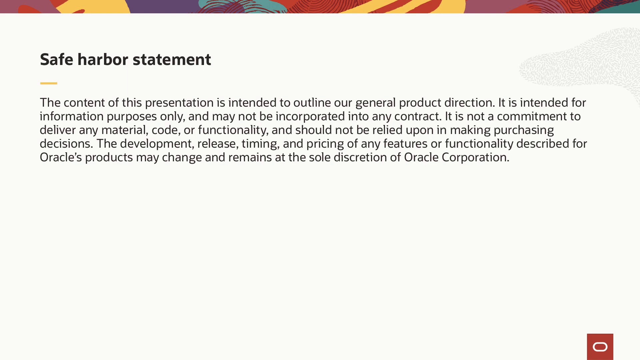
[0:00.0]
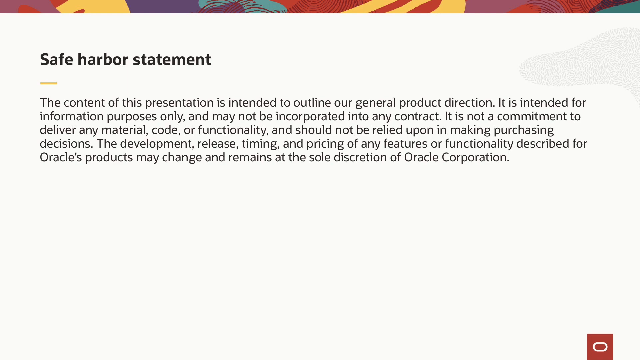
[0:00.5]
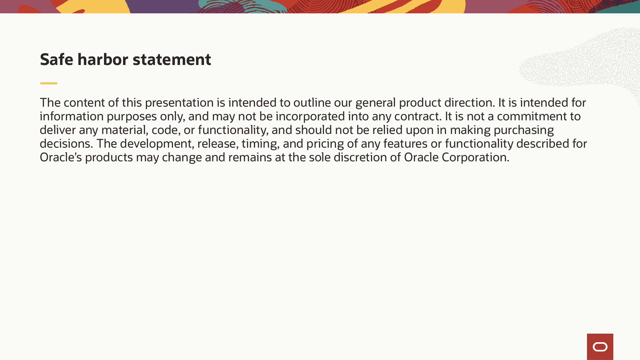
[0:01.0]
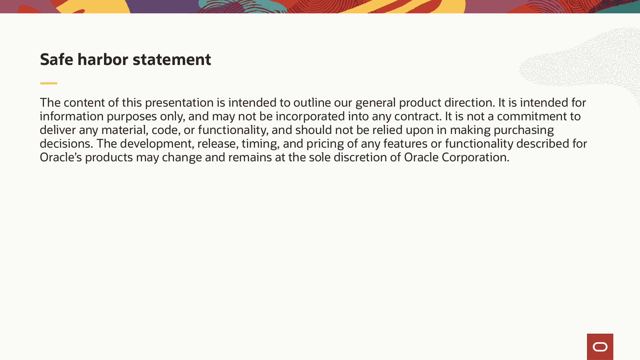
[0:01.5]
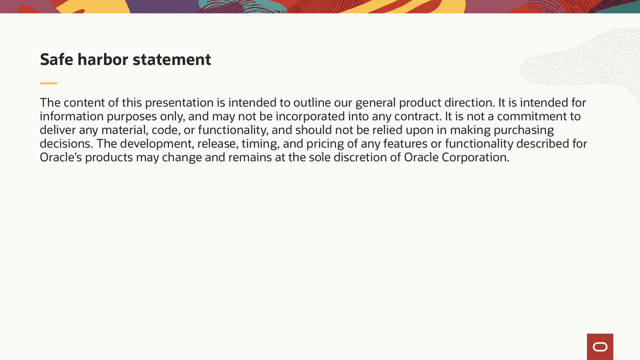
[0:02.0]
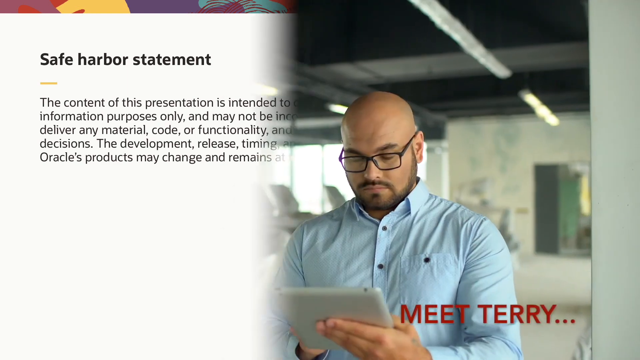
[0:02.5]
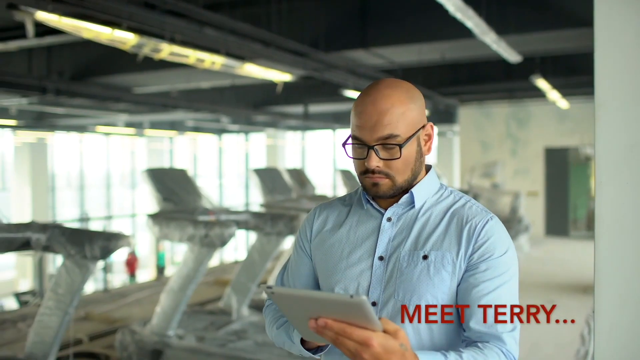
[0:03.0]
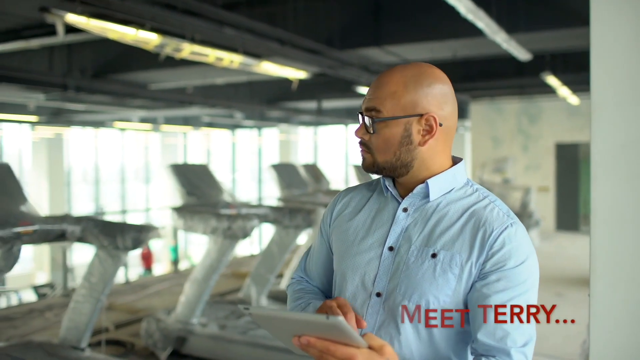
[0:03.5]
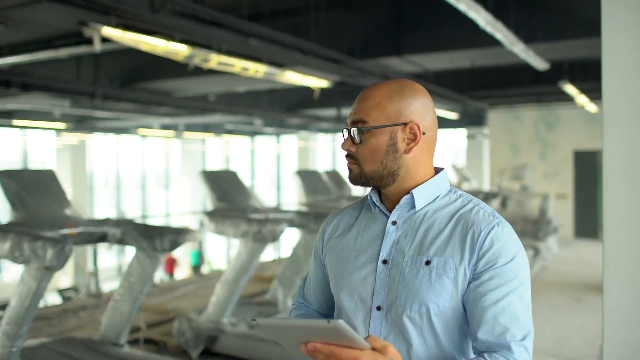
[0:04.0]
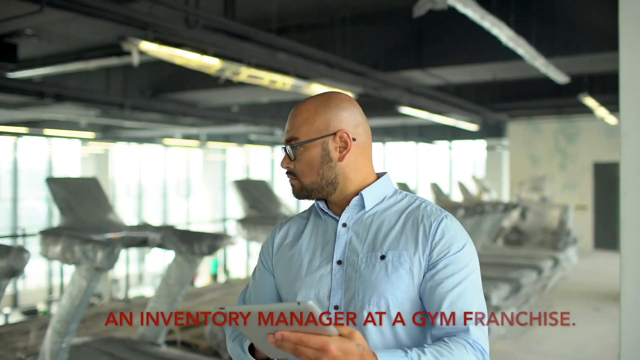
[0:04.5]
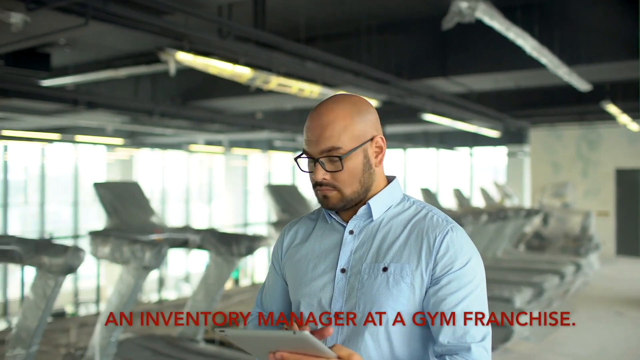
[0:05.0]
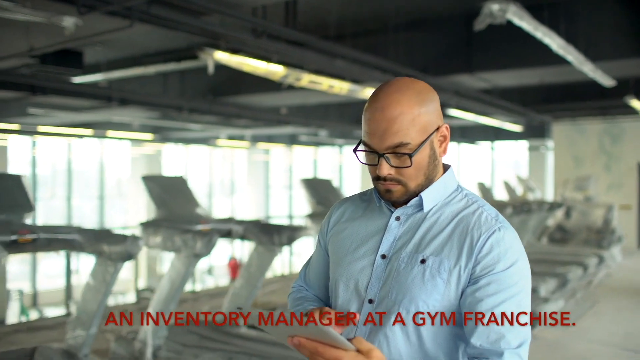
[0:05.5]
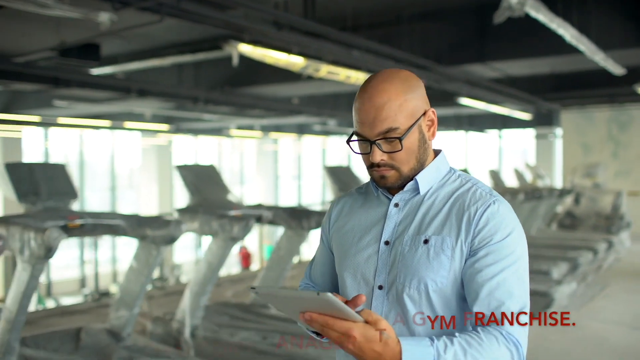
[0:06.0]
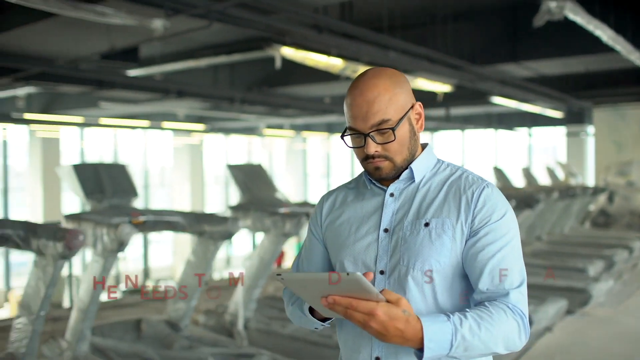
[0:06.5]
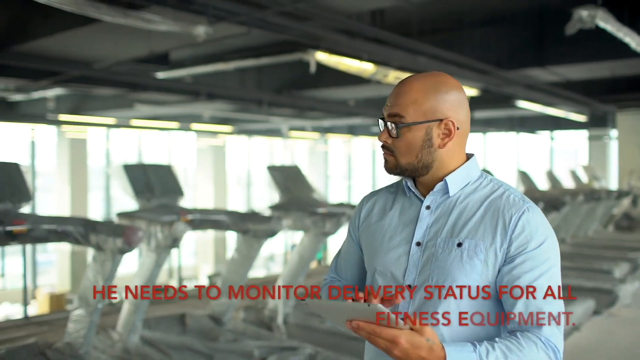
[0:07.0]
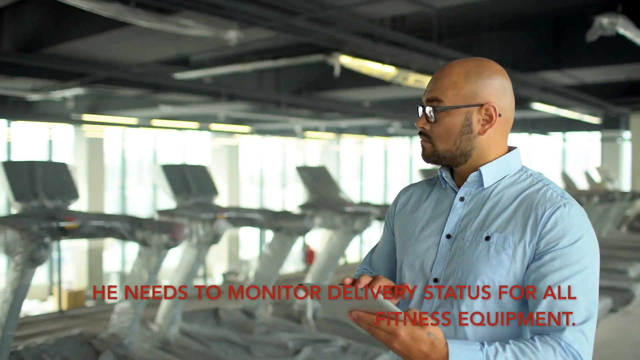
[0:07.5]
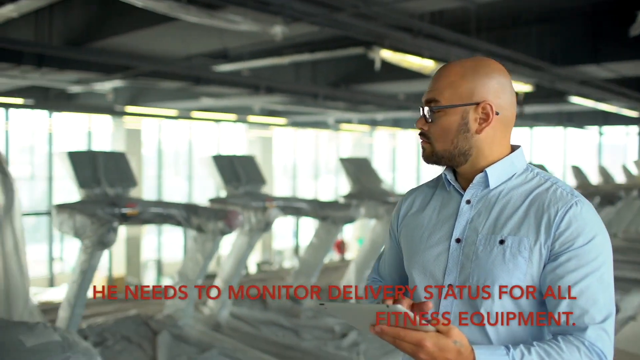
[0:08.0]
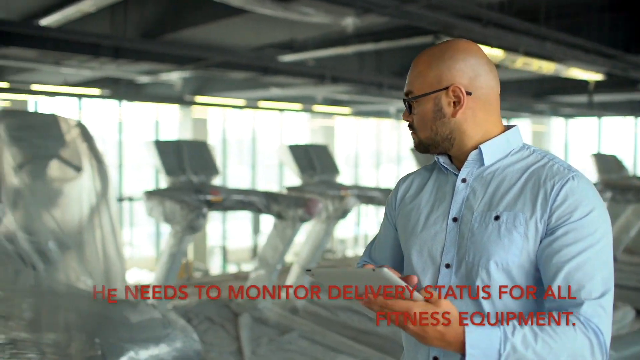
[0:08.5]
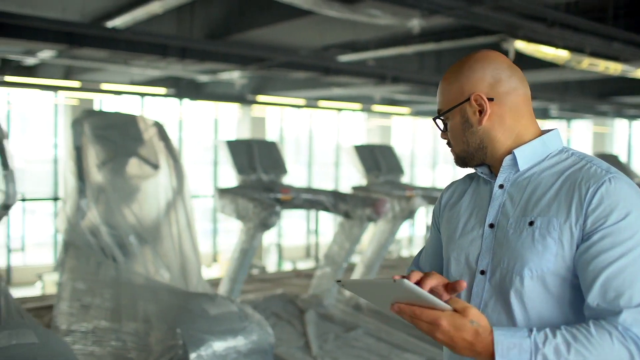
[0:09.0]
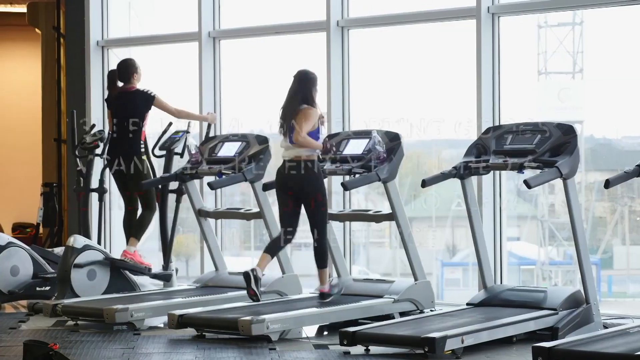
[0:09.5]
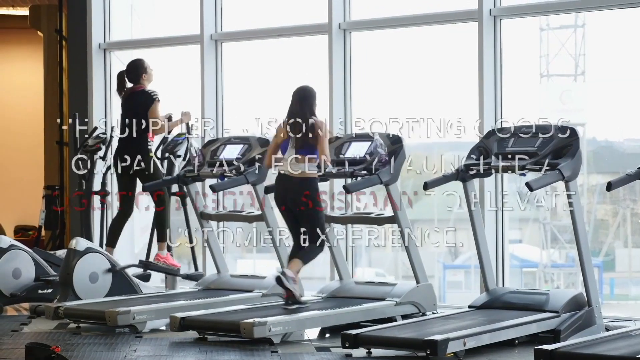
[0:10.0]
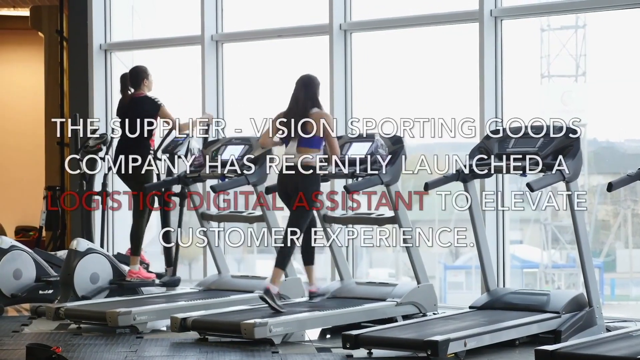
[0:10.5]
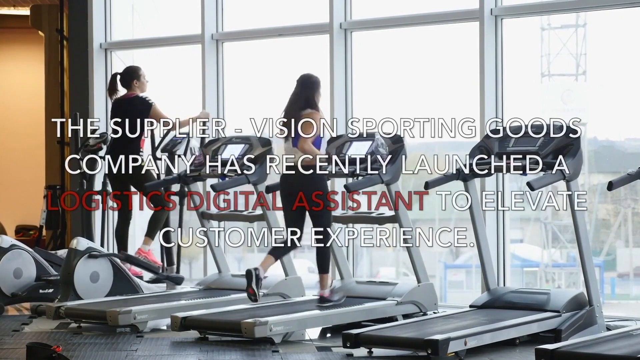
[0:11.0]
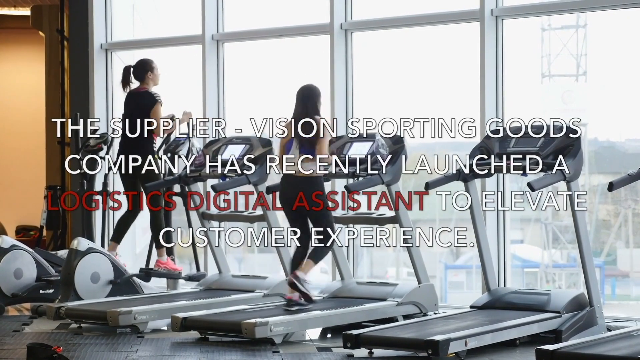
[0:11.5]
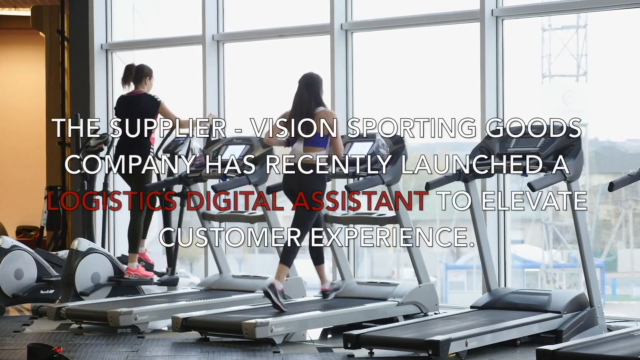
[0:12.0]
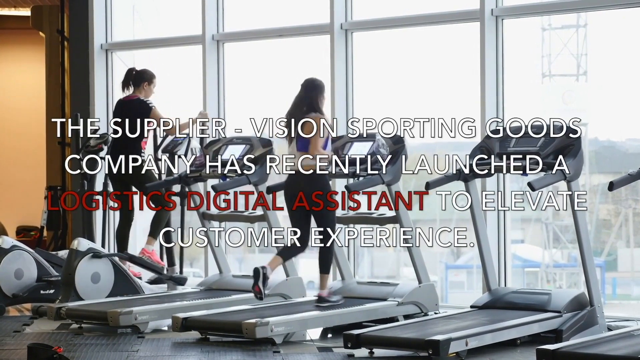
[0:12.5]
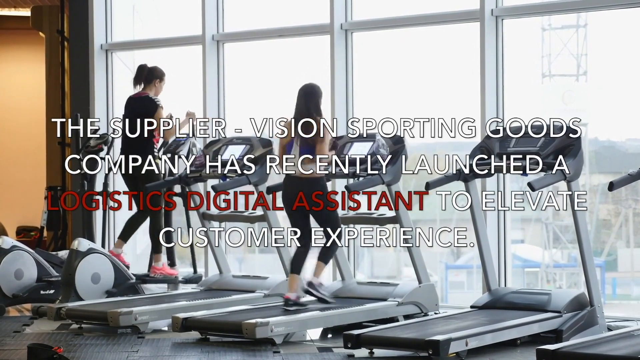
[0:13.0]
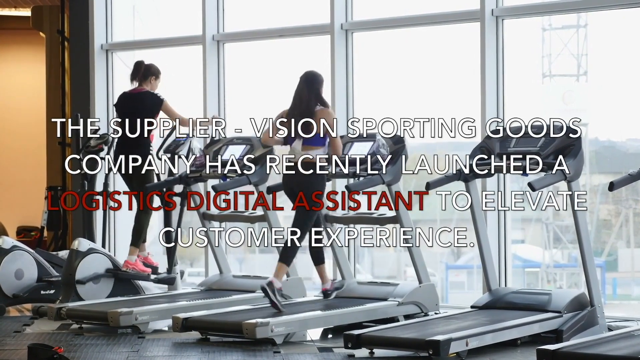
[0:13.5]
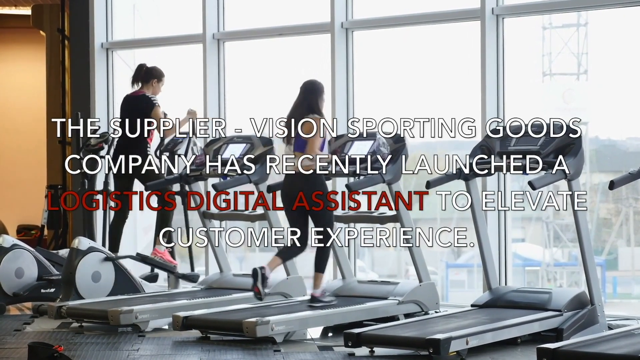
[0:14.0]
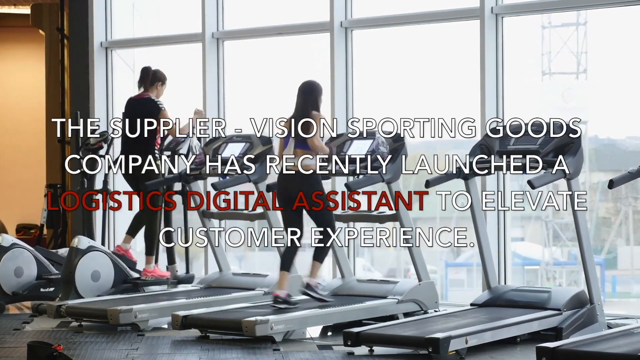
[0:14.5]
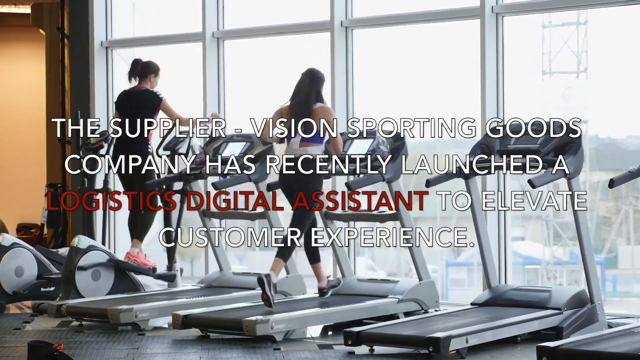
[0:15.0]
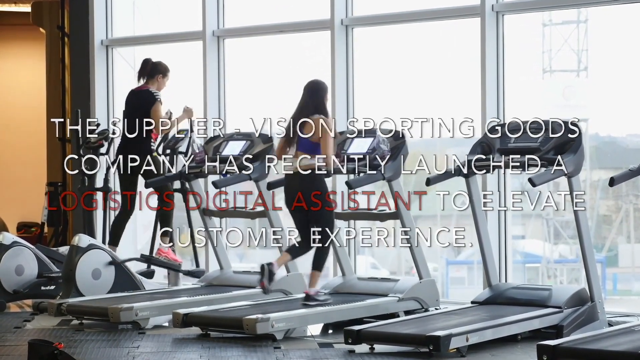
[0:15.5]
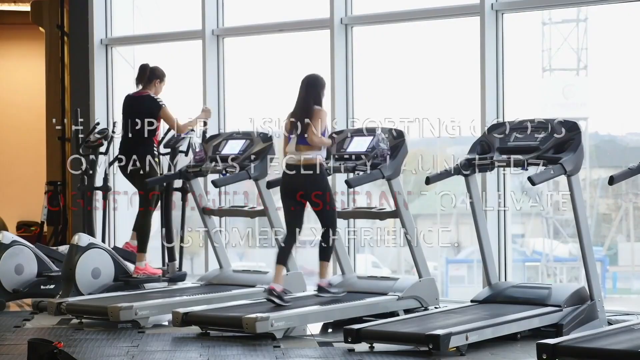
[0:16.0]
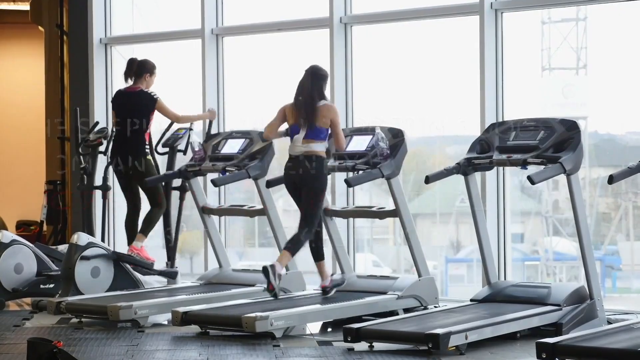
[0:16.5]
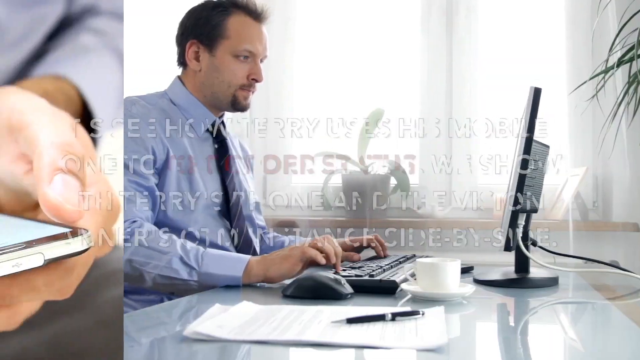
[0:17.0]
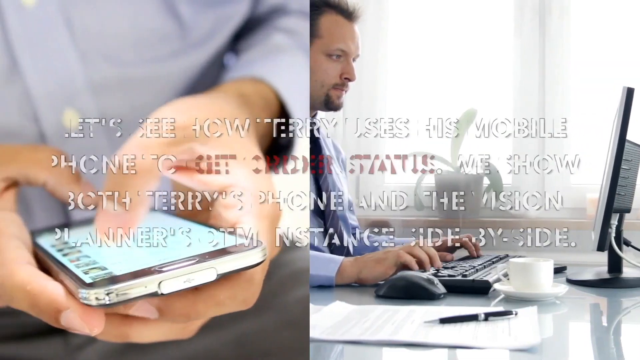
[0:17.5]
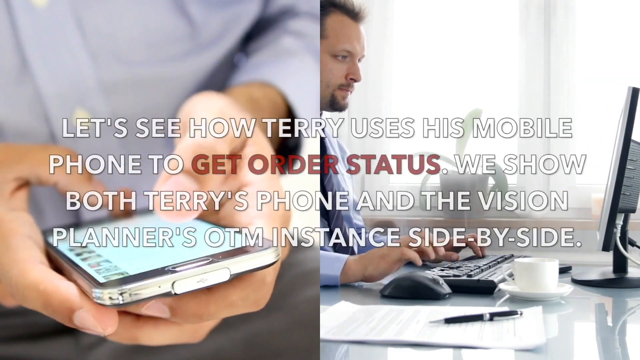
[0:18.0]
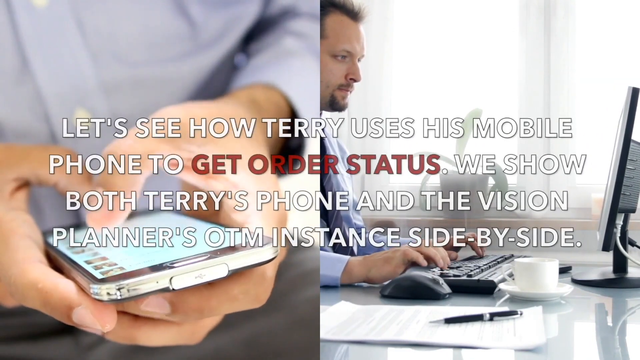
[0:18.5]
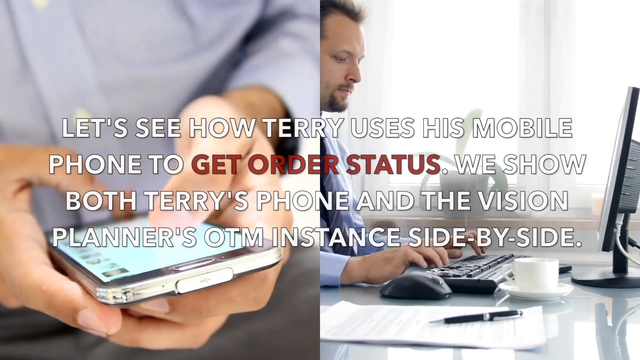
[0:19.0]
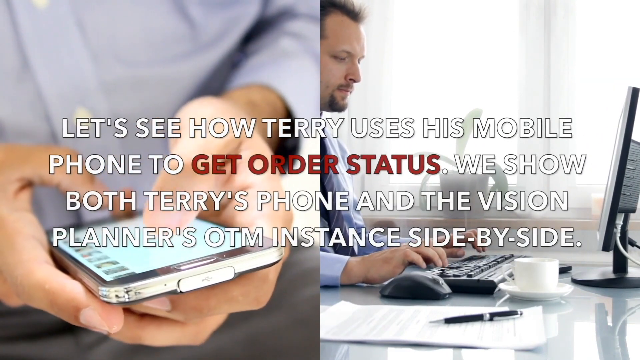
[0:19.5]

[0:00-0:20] A safe harbor statement opens the video, with a colorful design at the top of the screen and the statement below it on a white background. The video then transitions to a man who is bald with glasses, a beard and a blue shirt. He is an inventory manager, walking through what looks like the inventory at a gym franchise. Gym machines are visible in the background, all wrapped up and unused. Red text pops up saying that he needs to monitor delivery status for all of the fitness equipment. The text falls down, and more text appears in front of a shot of two women exercising with a window in the background: one is on a stepping bike-type piece of equipment and the other is on a treadmill, one running very fast and the other going at a normal pace. Next comes a split screen: on one half a man works on a computer, and the other half is a close-up of a man's phone, his fingers moving across the screen, with text in front.